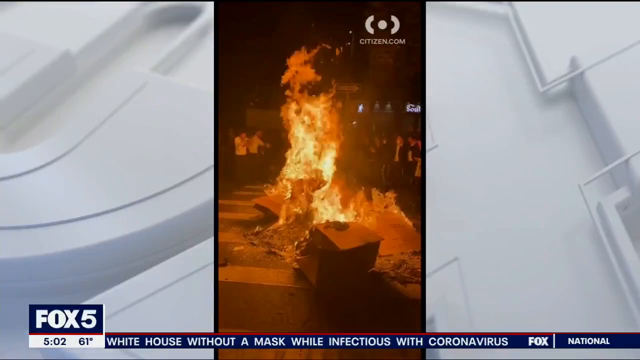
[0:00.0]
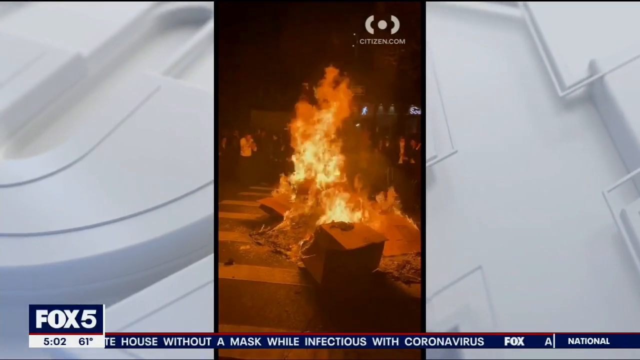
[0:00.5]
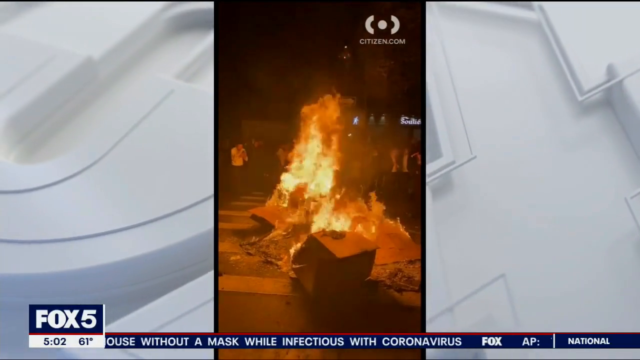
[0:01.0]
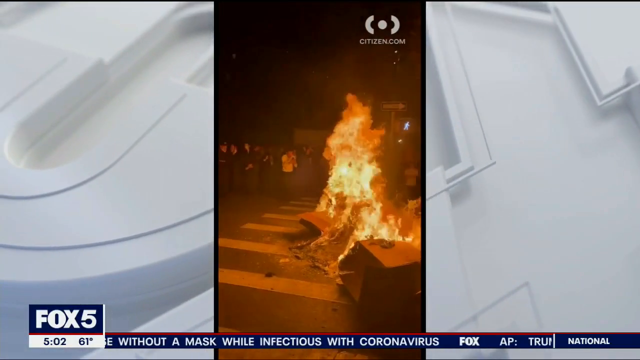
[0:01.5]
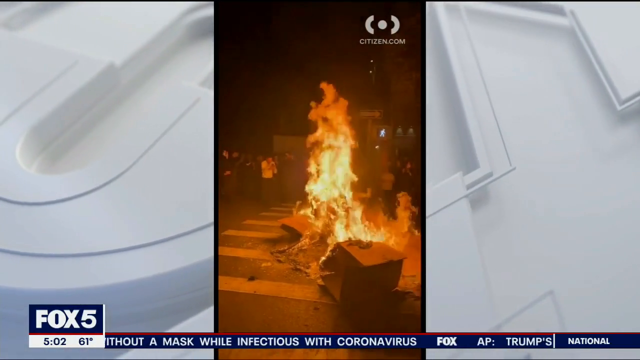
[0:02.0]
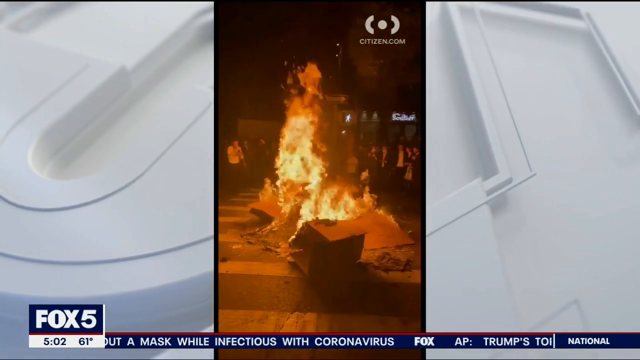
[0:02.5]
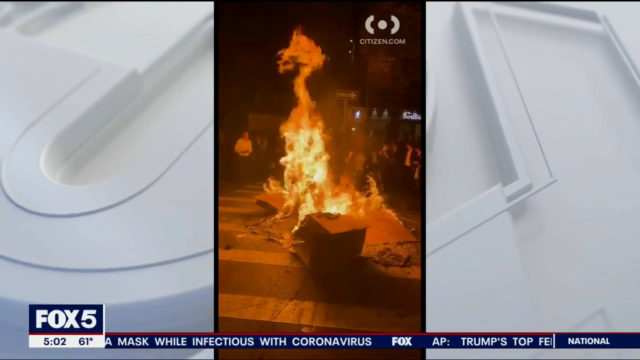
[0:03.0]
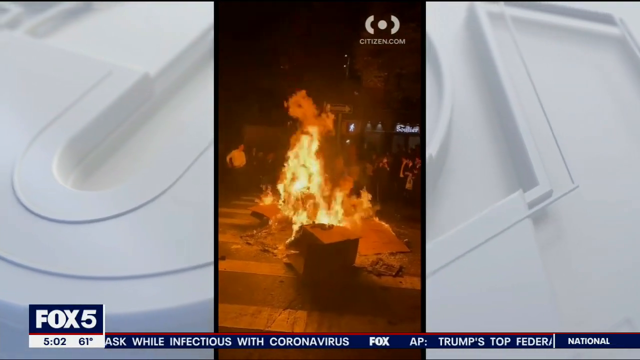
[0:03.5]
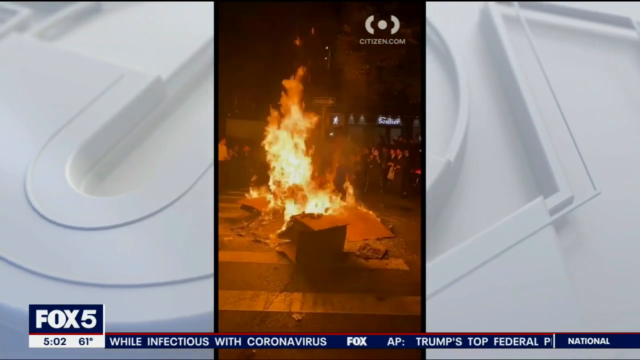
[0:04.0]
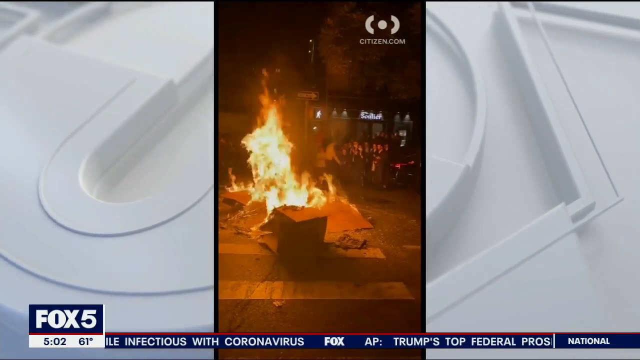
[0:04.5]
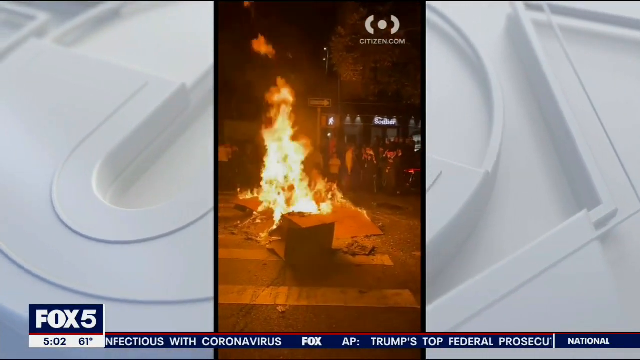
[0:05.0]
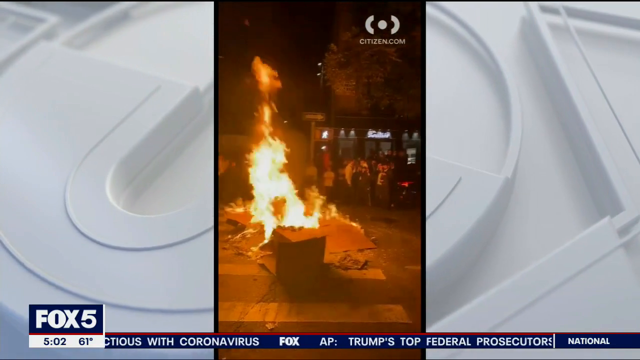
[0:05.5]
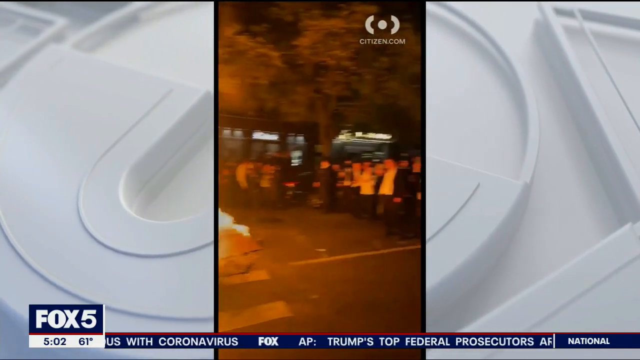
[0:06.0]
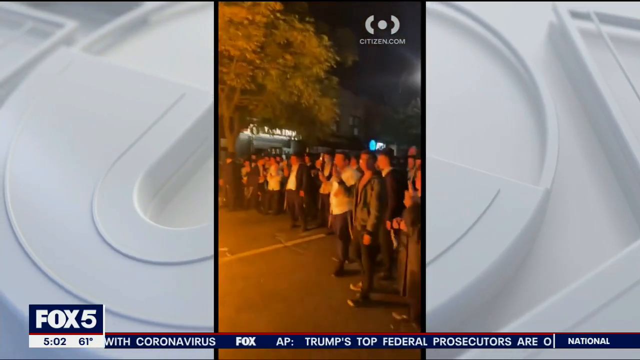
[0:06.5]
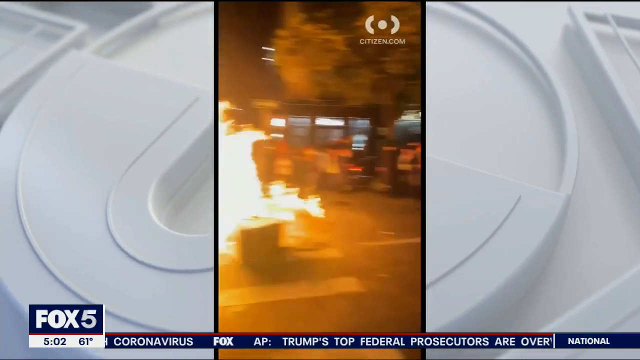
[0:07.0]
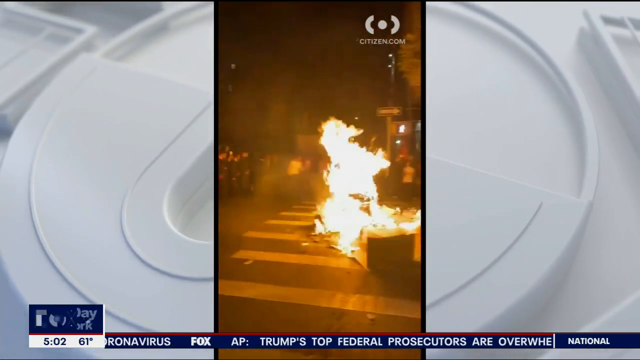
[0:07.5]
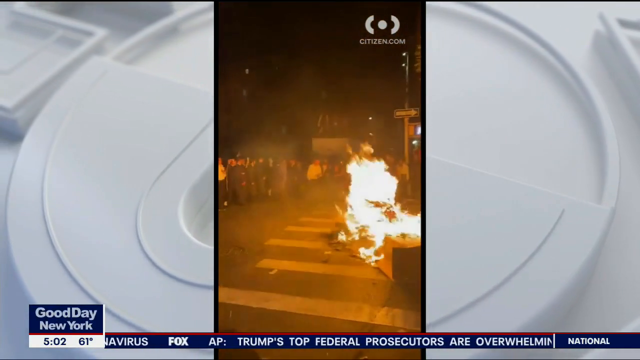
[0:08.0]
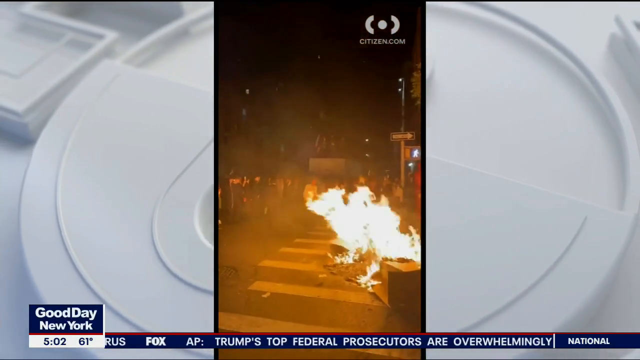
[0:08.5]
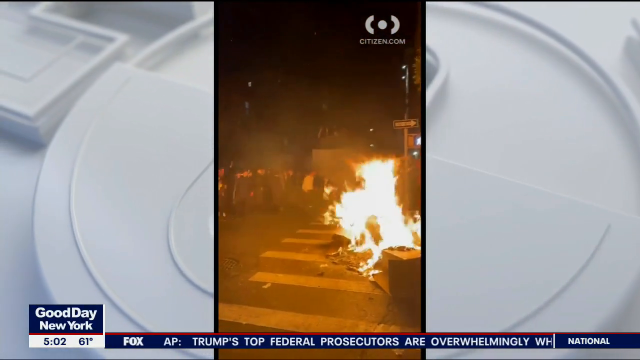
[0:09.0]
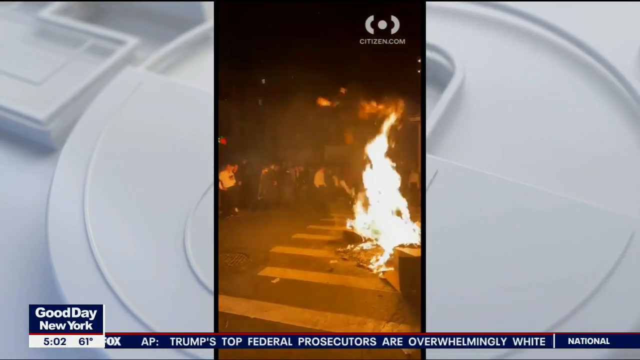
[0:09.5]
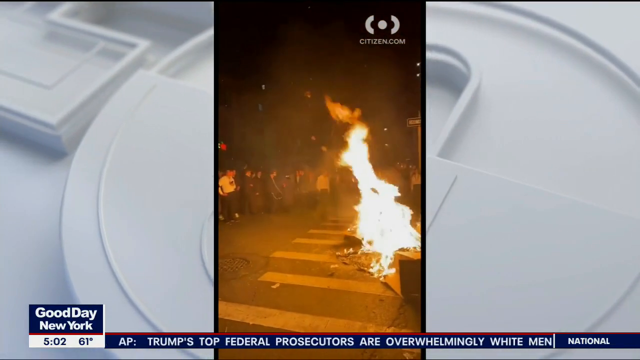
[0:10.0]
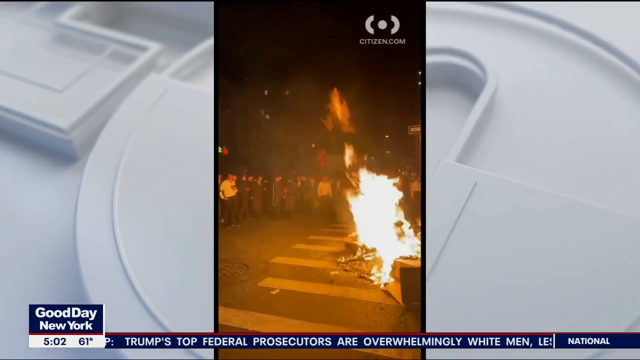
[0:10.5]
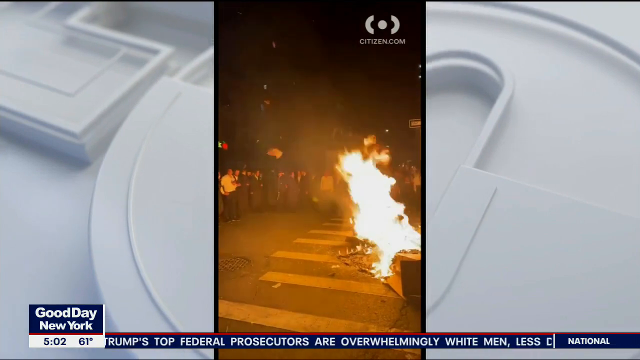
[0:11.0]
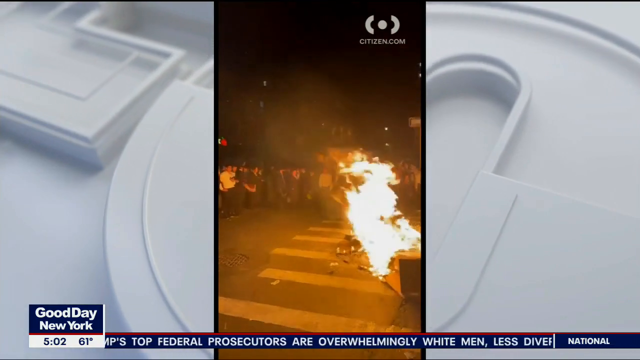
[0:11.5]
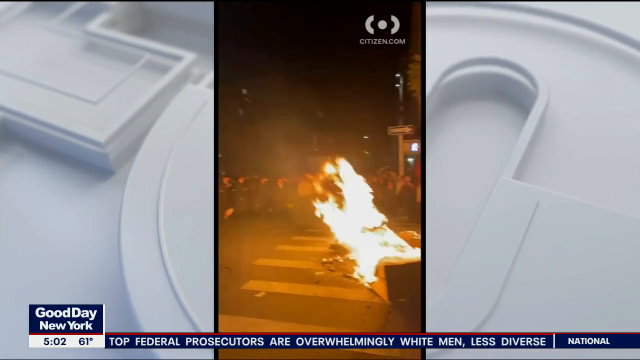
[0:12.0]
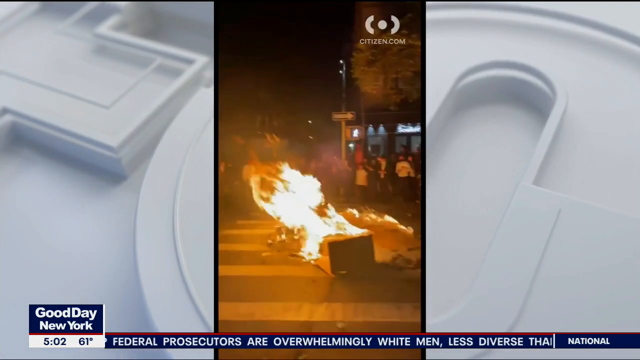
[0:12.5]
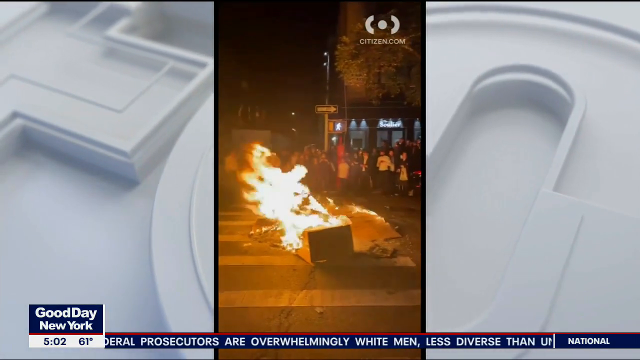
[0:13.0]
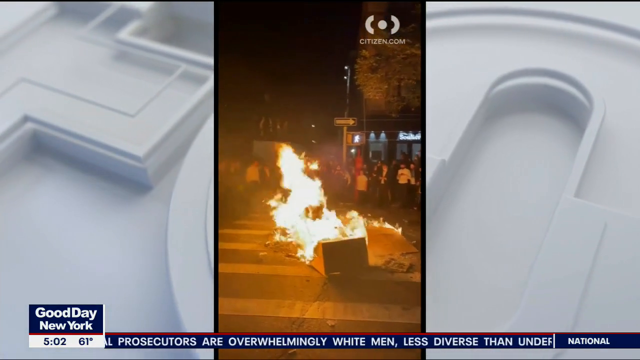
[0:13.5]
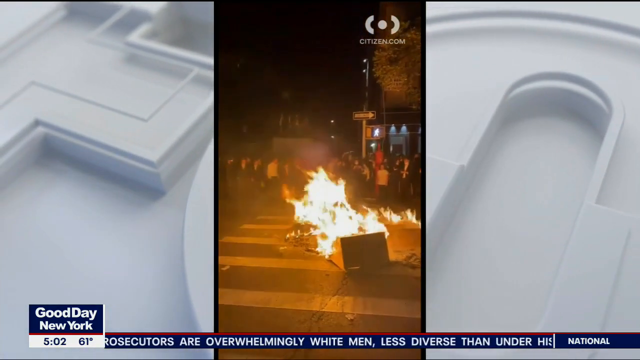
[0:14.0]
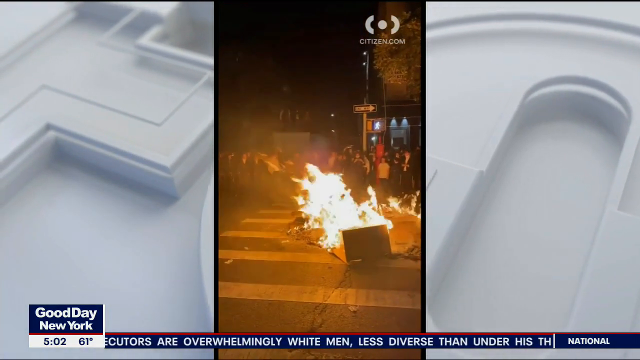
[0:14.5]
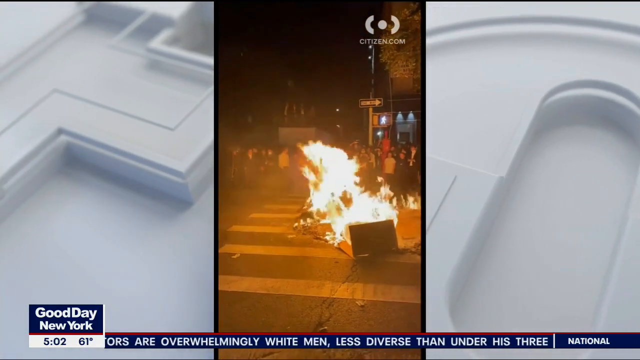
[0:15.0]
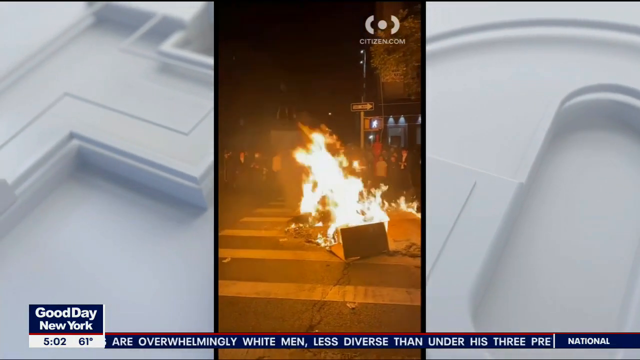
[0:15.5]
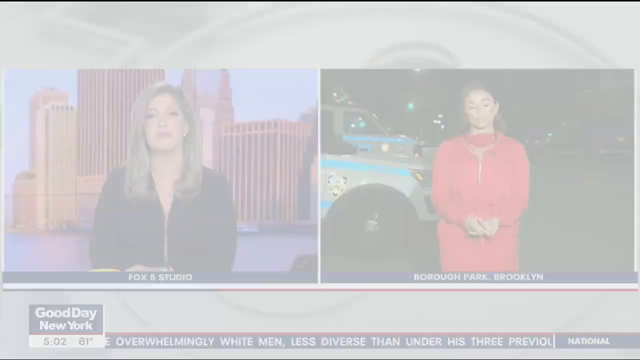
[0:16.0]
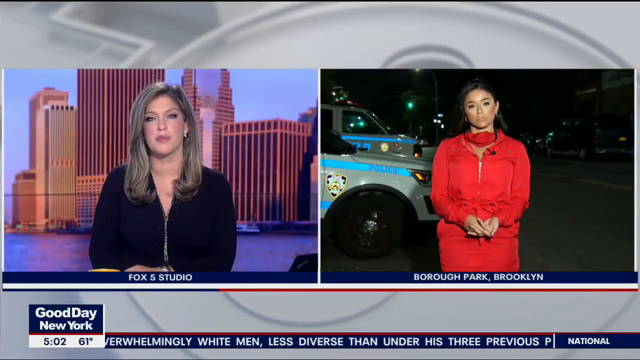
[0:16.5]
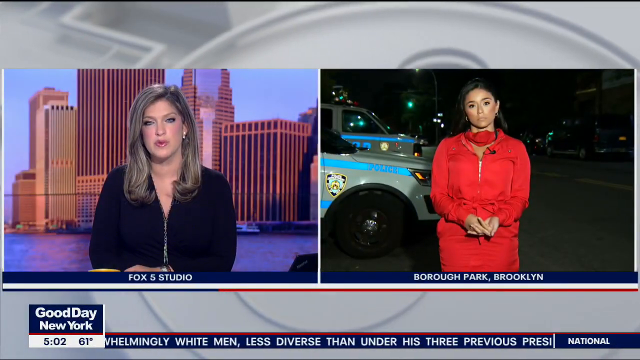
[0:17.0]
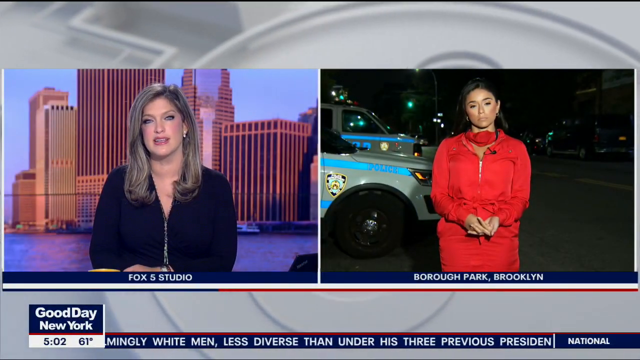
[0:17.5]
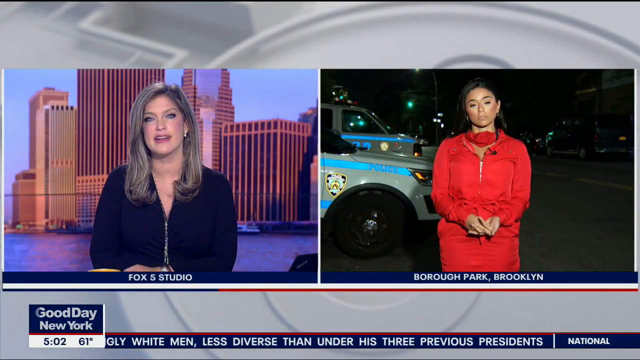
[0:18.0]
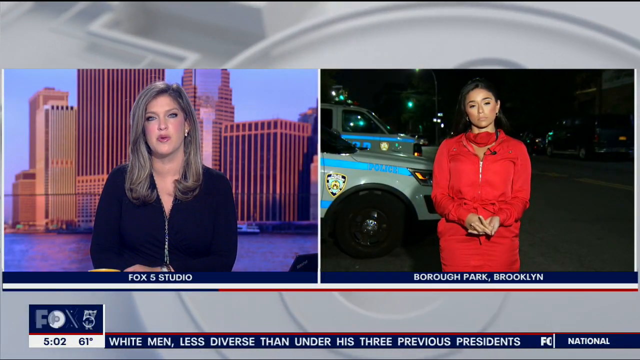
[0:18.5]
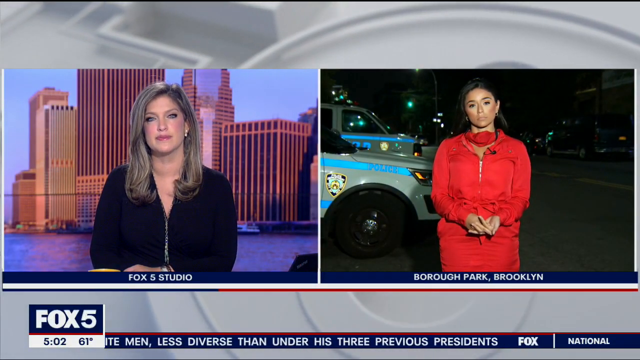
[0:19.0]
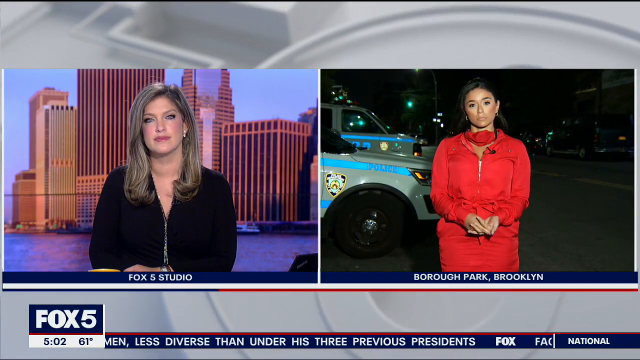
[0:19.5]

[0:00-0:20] The background is a large, zoomed-in Fox logo, and in the centre of the screen is a vertically recorded video of something on fire in the street, on a zebra crossing. Hordes of Hasidic Jews are in the background, and it appears that all of the Hasidic Jews present are men. In the top right-hand corner, the word "citizen.com" appears as a watermark. The recording bounces back and forth, showing the large crowd gathered around the fire and then focusing again on the fire in the middle of the street. The flames are very large, going up into the sky in line with a traffic signal on the pavement. In the bottom left-hand corner is a square with the words "Good Day New York" written in it, and the segment shows a time of 5.02 in the morning and a temperature of 61 degrees outside. The text then changes to read "Fox 5". Along the bottom of the screen, rolling news stories move from right to left.